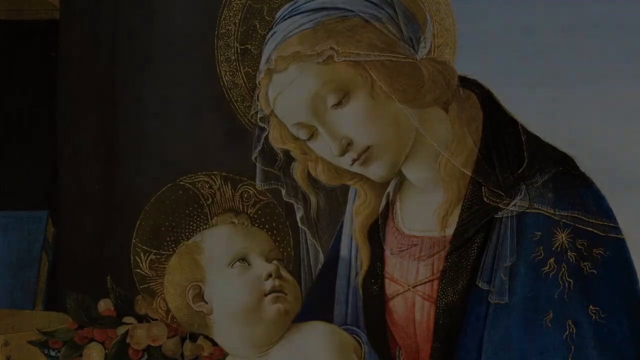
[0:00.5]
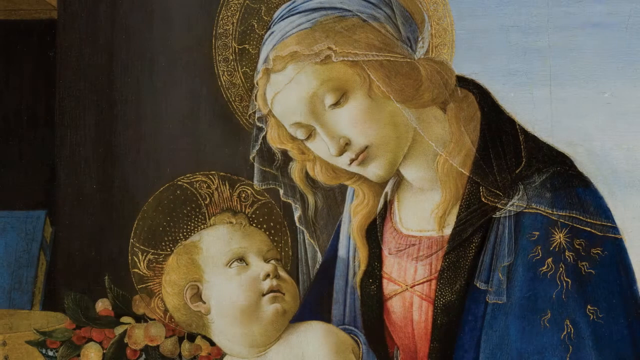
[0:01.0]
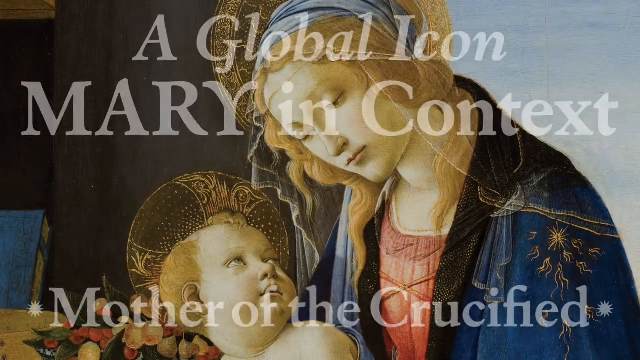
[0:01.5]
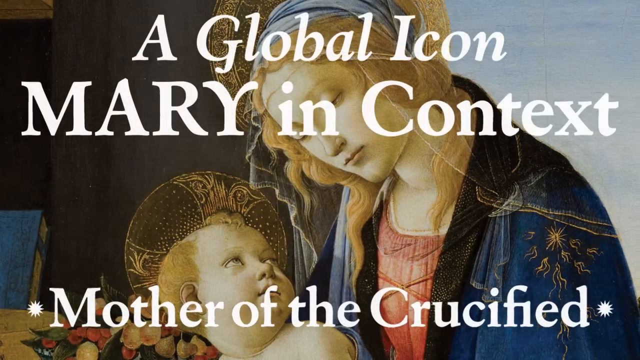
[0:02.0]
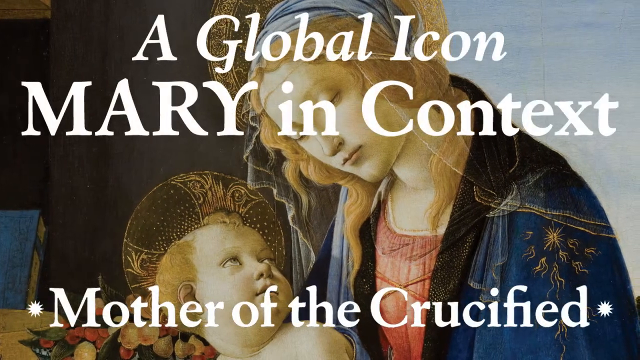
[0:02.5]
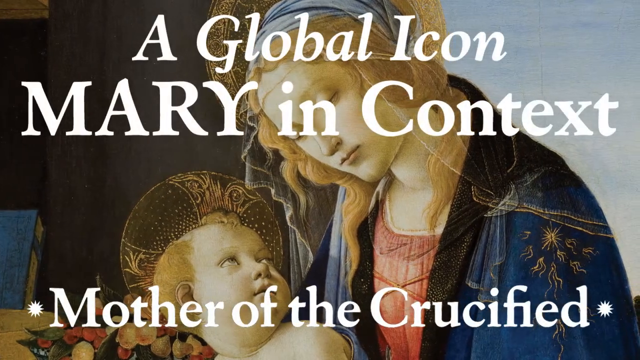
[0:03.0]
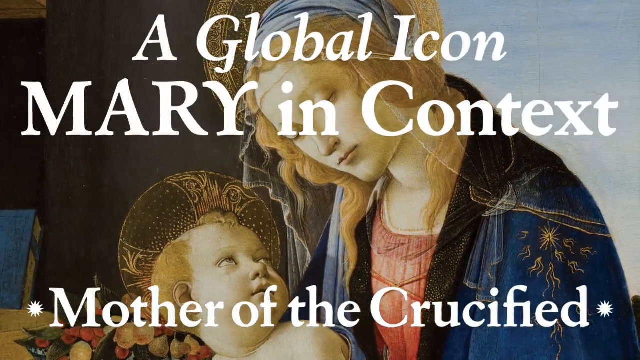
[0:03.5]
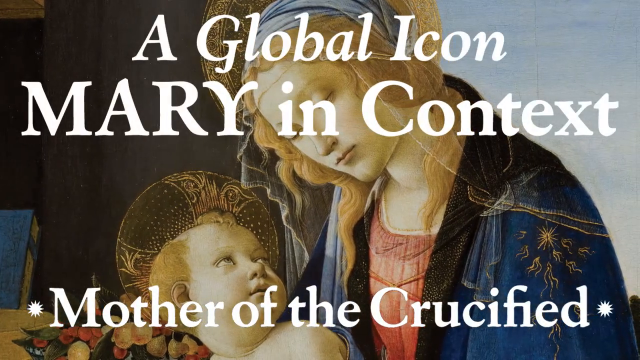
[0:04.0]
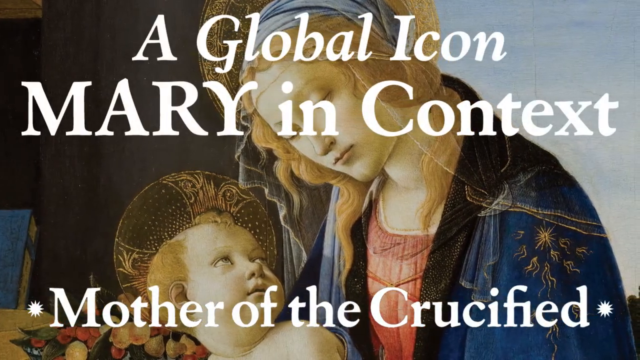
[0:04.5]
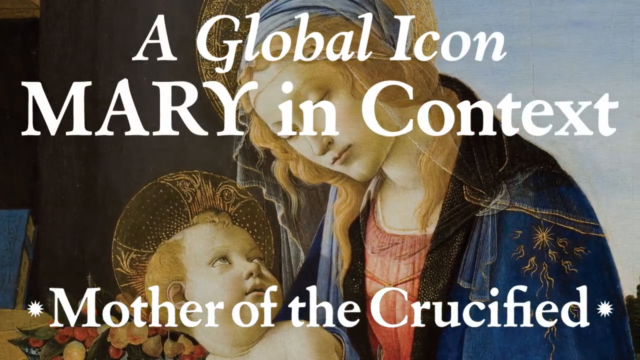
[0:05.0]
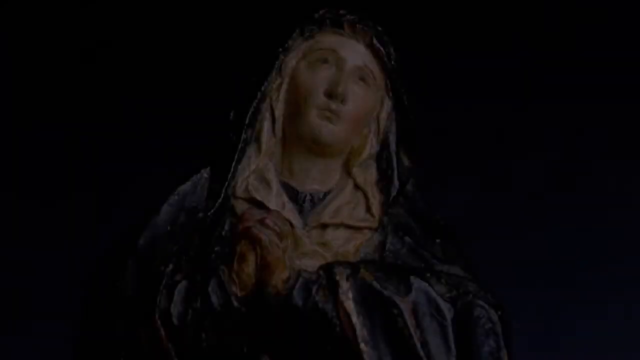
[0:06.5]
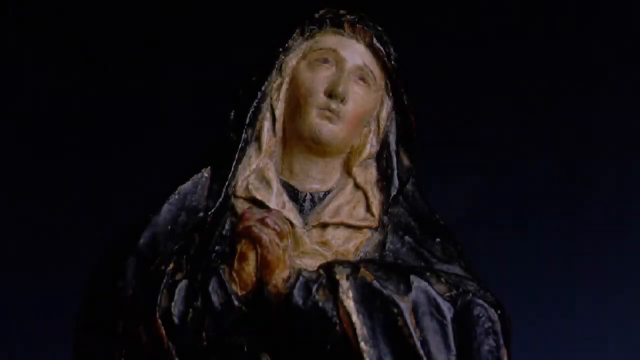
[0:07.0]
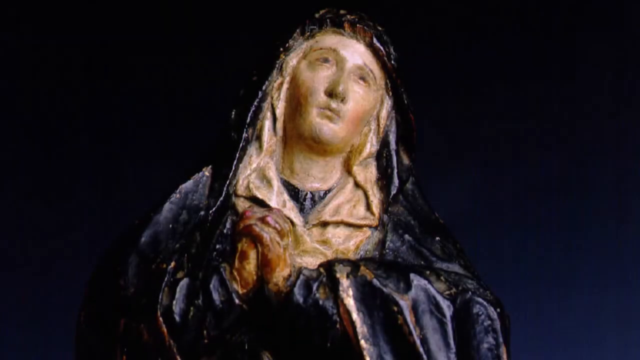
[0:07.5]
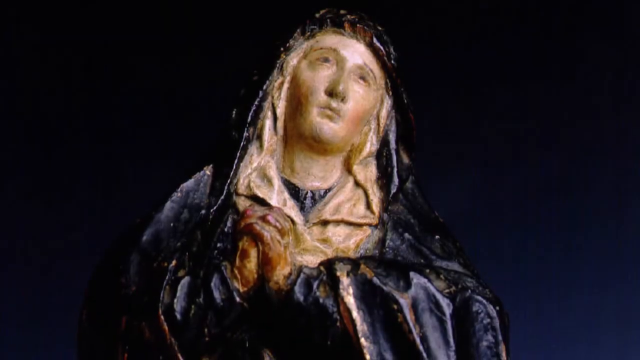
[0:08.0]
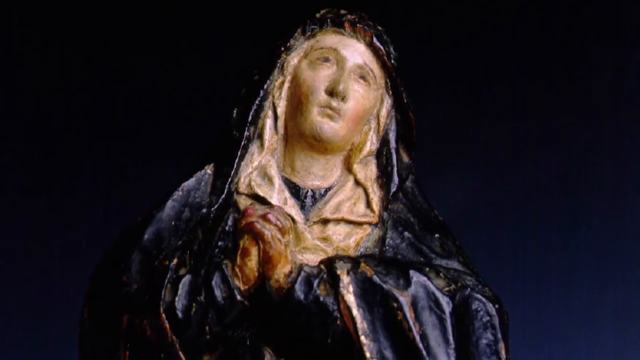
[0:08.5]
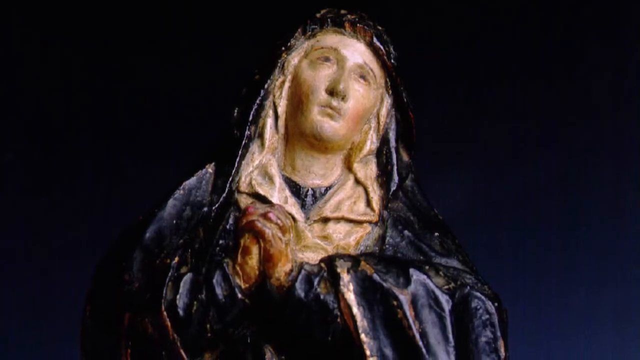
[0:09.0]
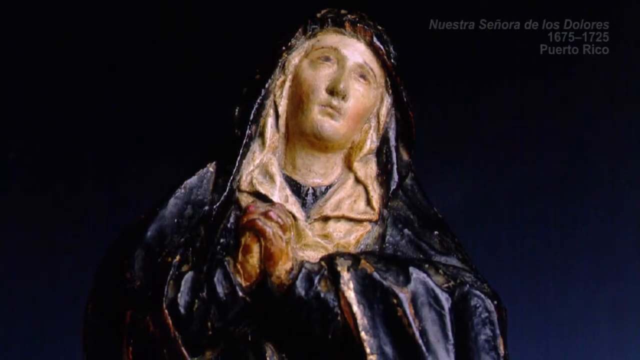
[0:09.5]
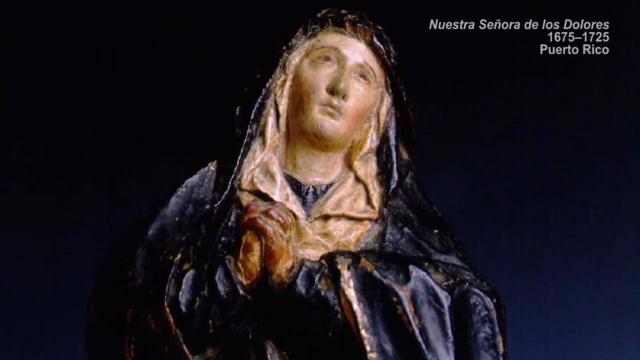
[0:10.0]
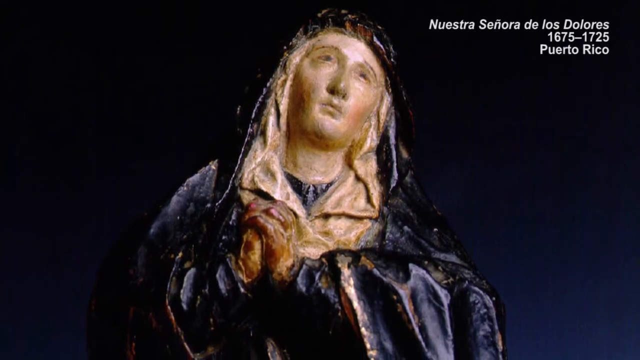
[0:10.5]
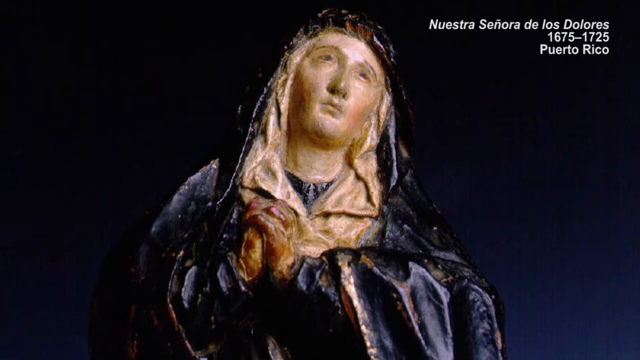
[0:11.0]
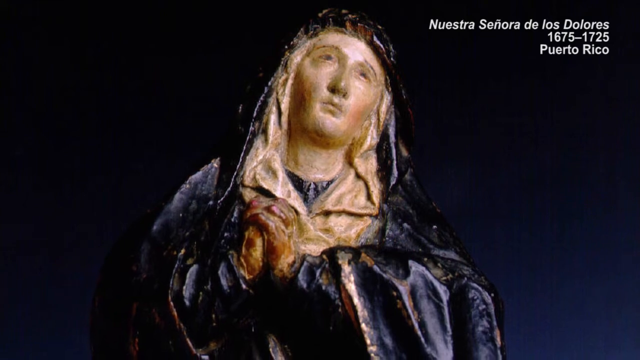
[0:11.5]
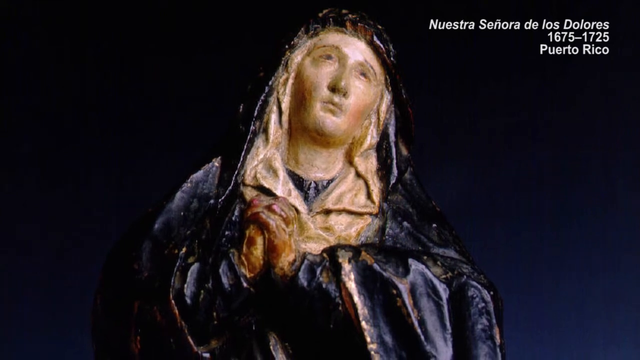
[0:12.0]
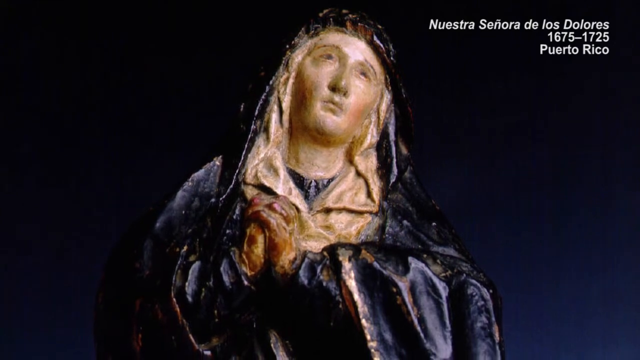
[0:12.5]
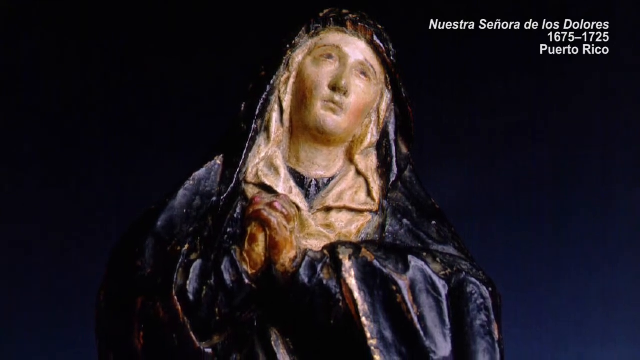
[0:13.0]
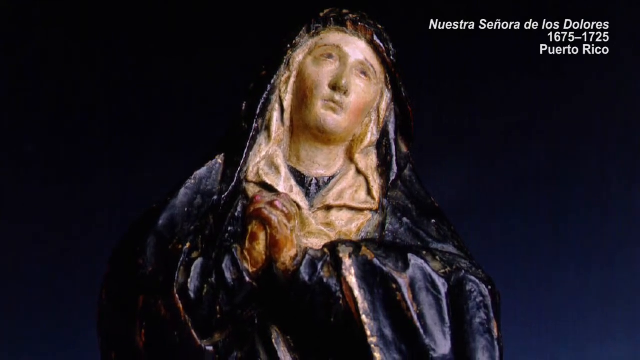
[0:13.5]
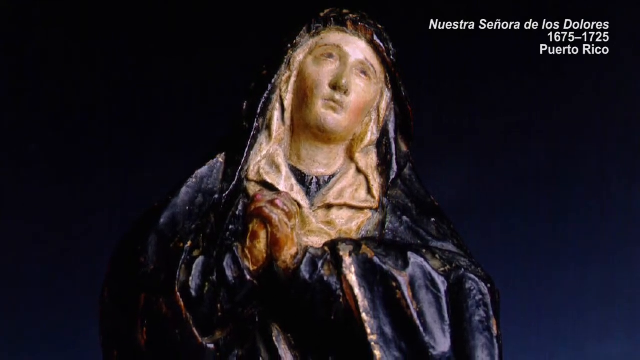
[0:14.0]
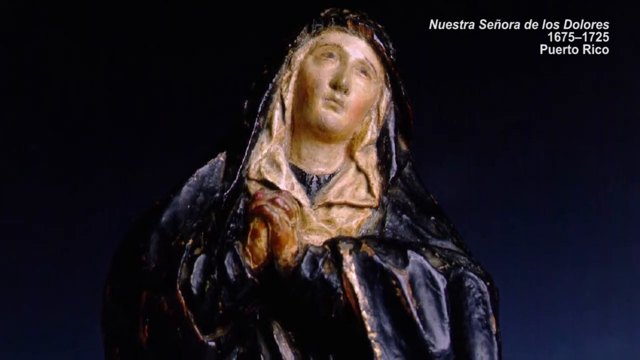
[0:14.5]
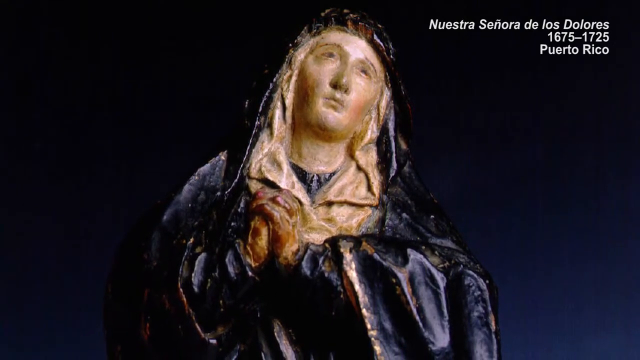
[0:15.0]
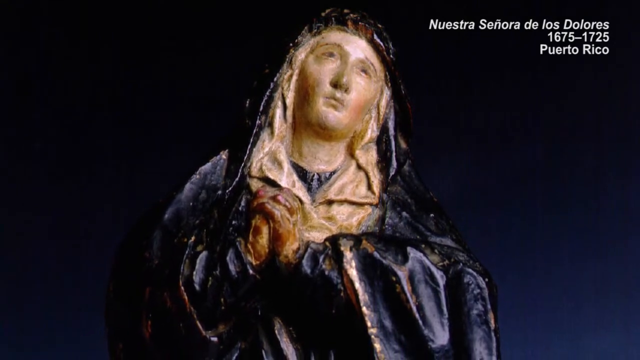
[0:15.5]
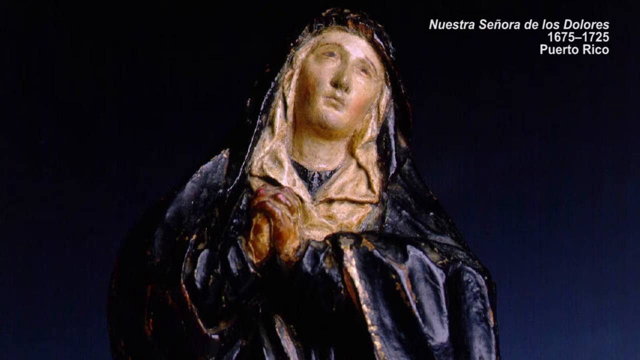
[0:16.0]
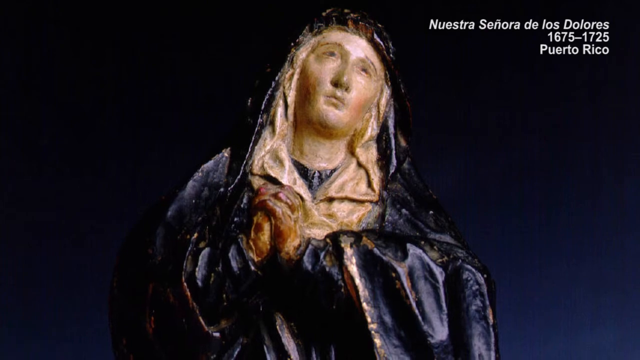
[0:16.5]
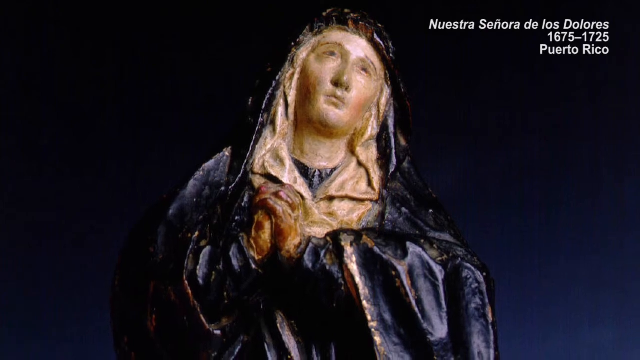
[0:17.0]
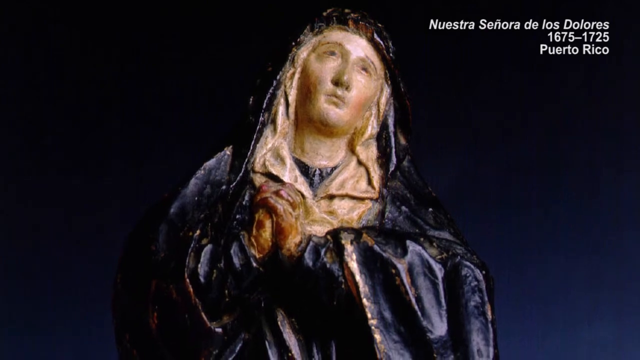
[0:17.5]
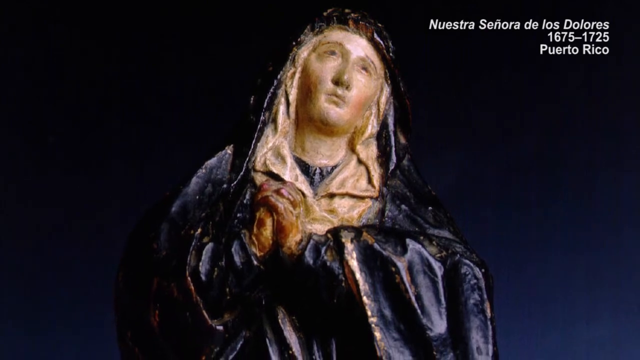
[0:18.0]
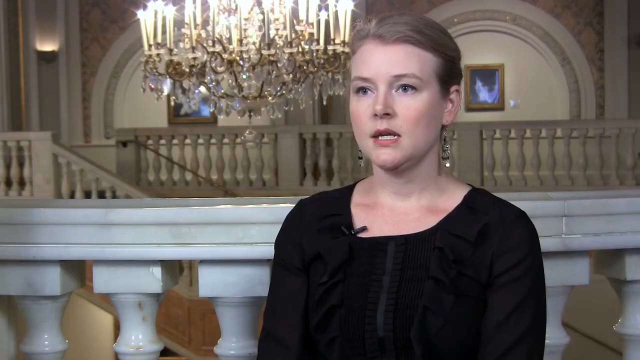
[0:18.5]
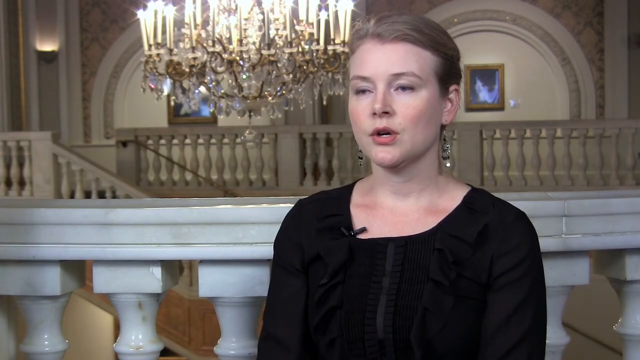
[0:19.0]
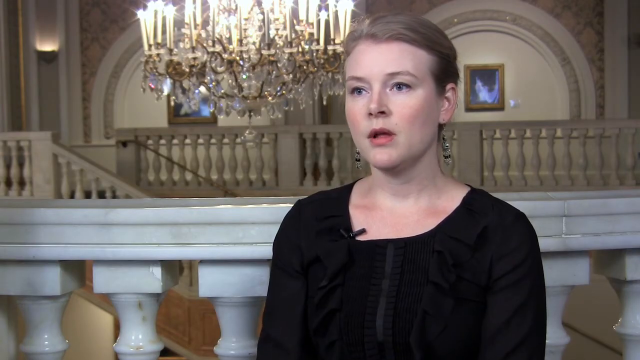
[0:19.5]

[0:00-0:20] The video appears to be religious in nature. In the background is what looks like Mary holding a baby in her hands; the baby looks up at her while Mary looks down. Text appears on top of the image reading "a global icon Mary in context mother of the crucified." The image pans somewhat from right to left, then the video cuts to a statue of Mary, who looks up toward the right side of the frame with her hands clasped toward the left side. In the upper right corner, text reads "Señora de los Dolores 1675 to 1725, Puerto Rico." The camera slowly pans out on the figure. The video then cuts to a blonde woman with her hair pulled back, wearing dangling earrings and a black top, speaking to someone off-camera toward the left side of the screen. A chandelier is in the upper left.